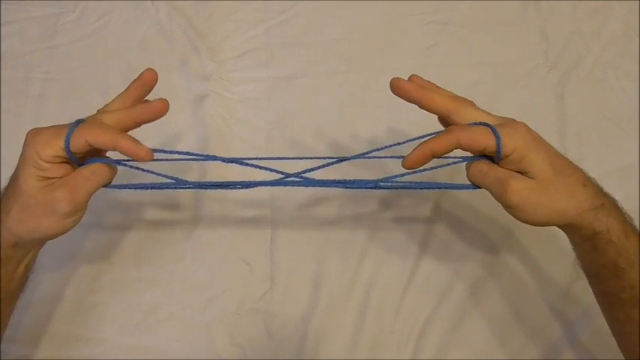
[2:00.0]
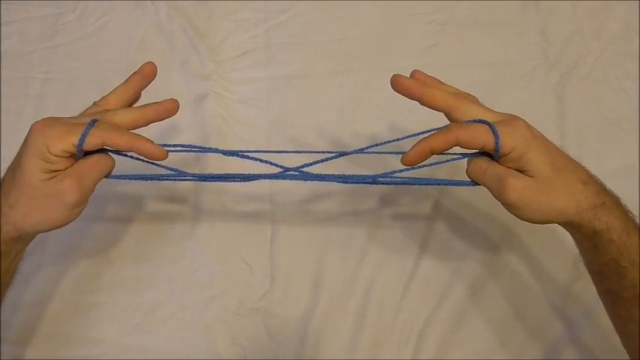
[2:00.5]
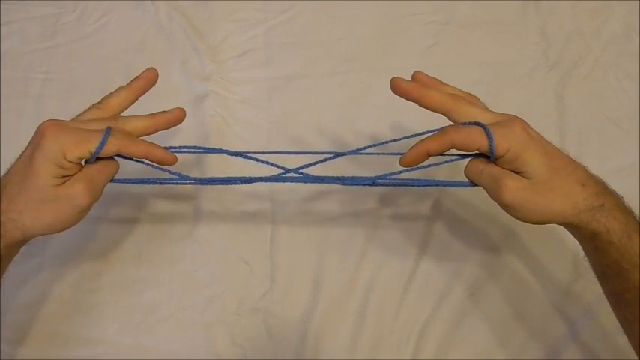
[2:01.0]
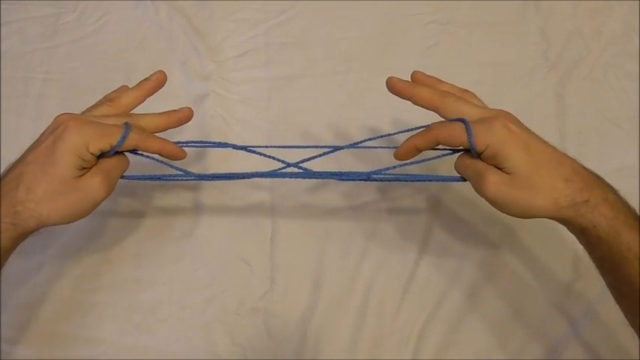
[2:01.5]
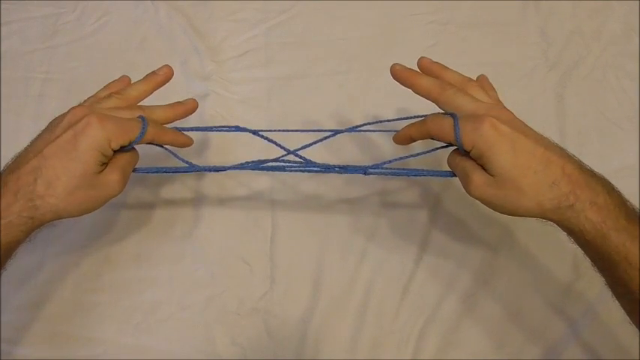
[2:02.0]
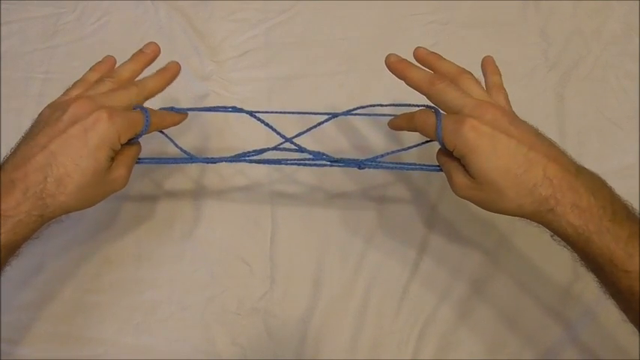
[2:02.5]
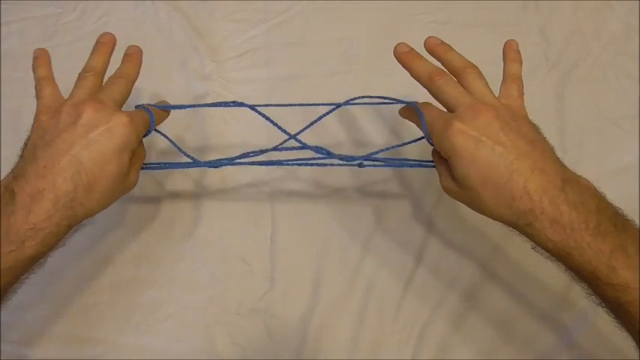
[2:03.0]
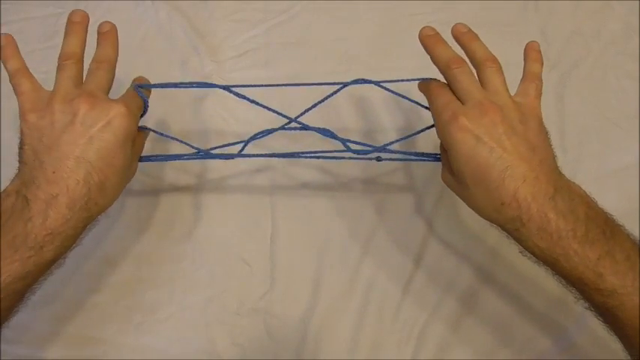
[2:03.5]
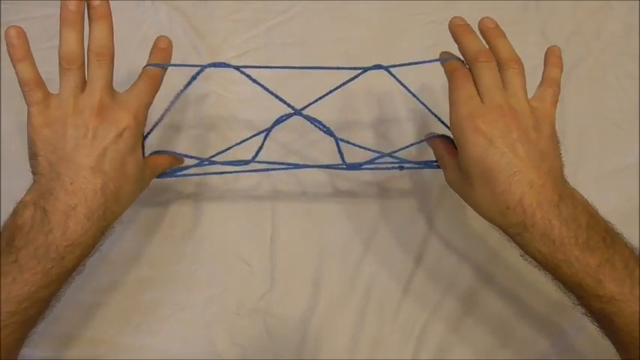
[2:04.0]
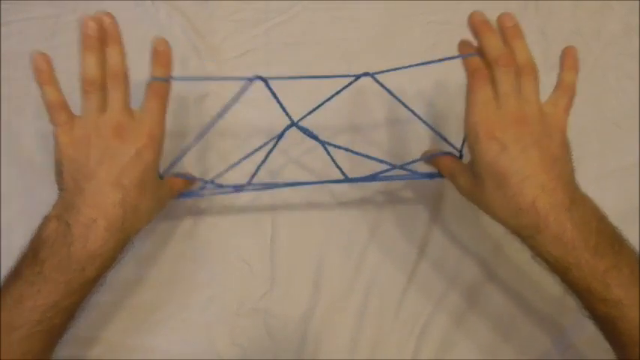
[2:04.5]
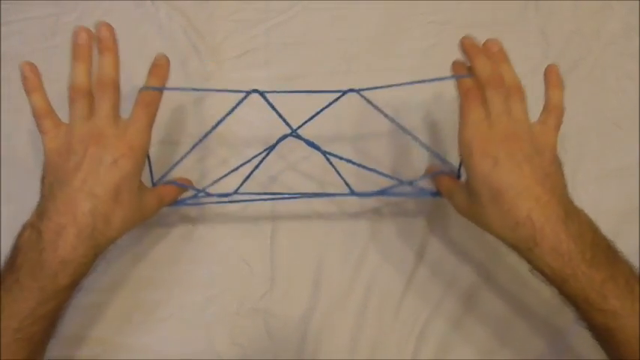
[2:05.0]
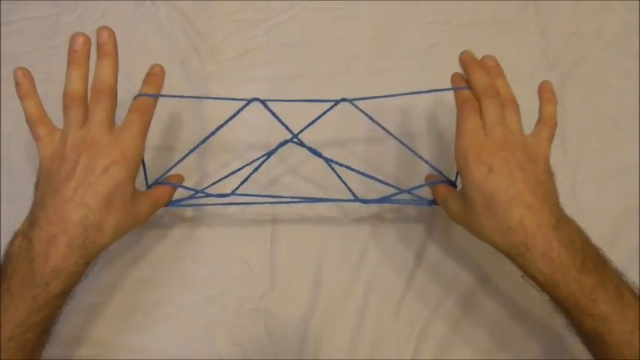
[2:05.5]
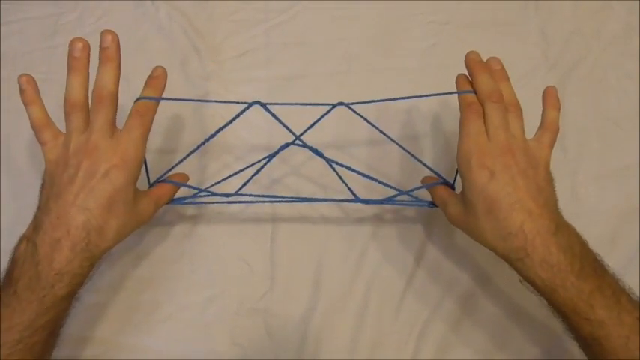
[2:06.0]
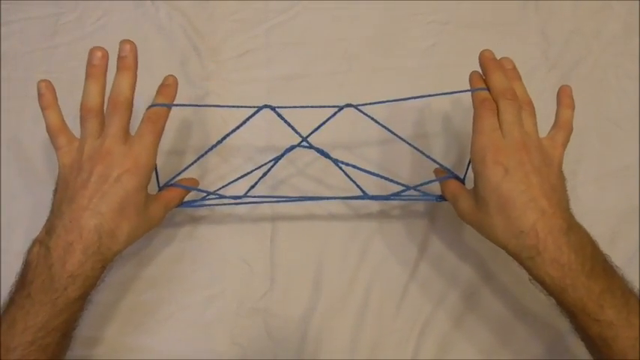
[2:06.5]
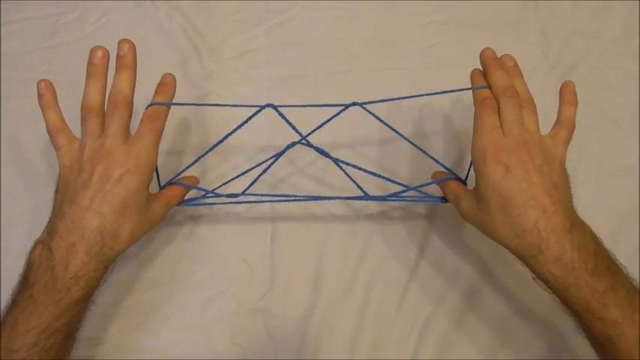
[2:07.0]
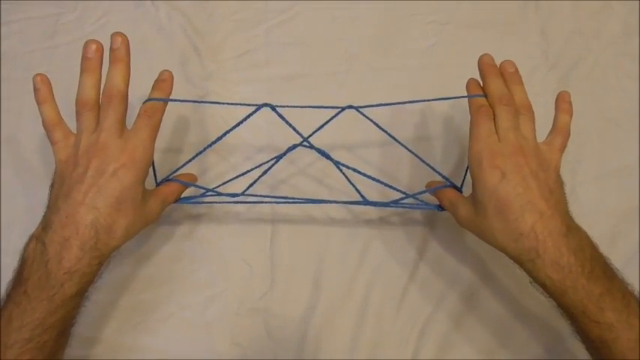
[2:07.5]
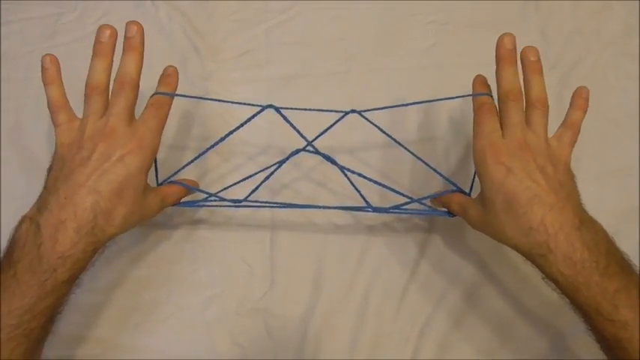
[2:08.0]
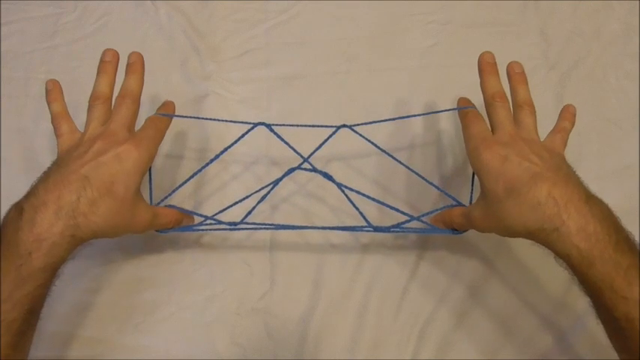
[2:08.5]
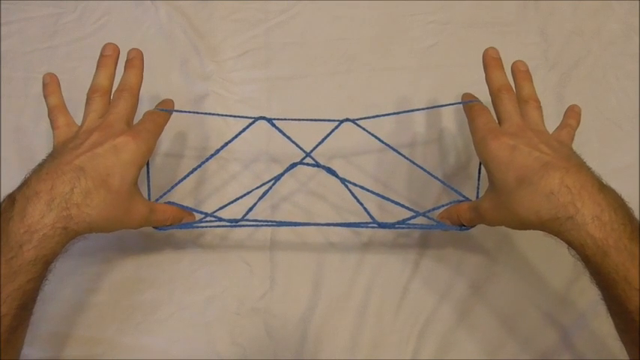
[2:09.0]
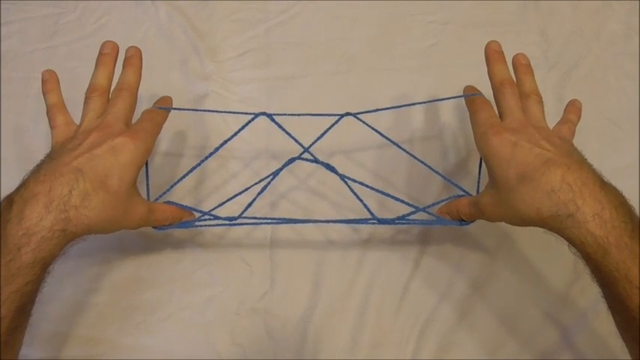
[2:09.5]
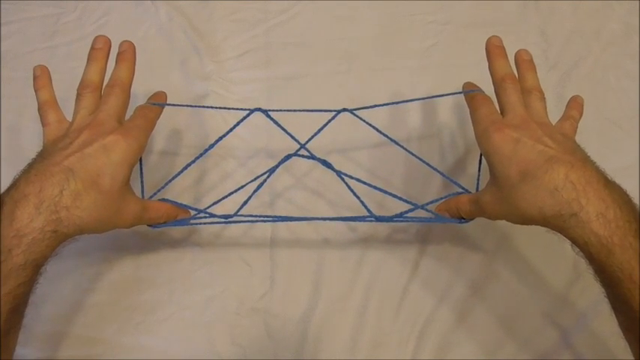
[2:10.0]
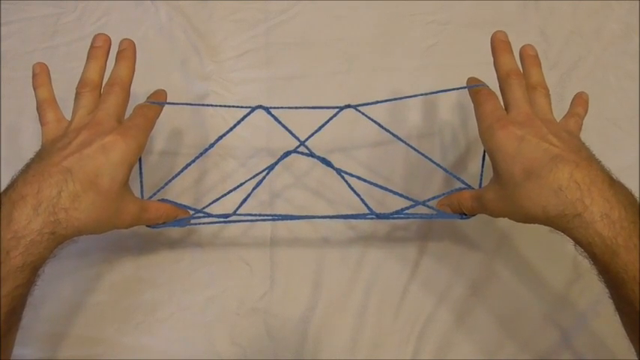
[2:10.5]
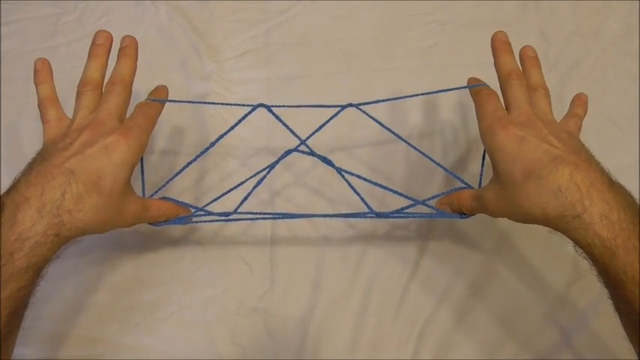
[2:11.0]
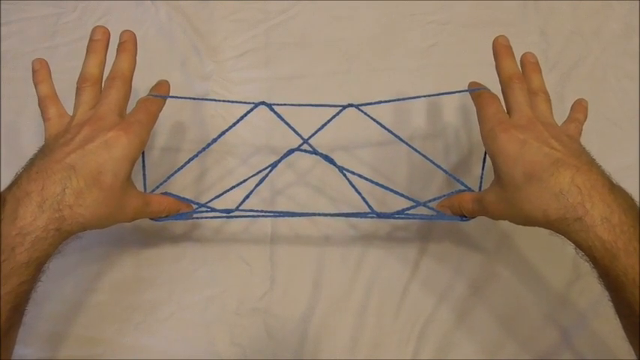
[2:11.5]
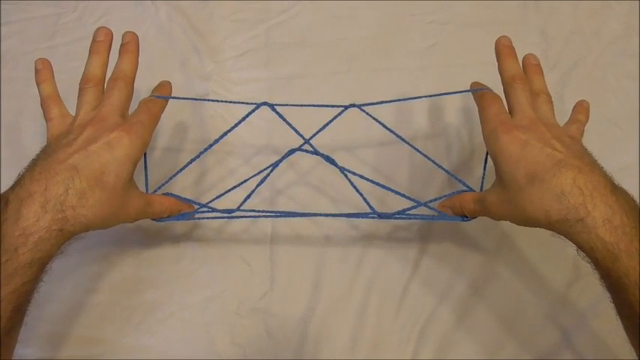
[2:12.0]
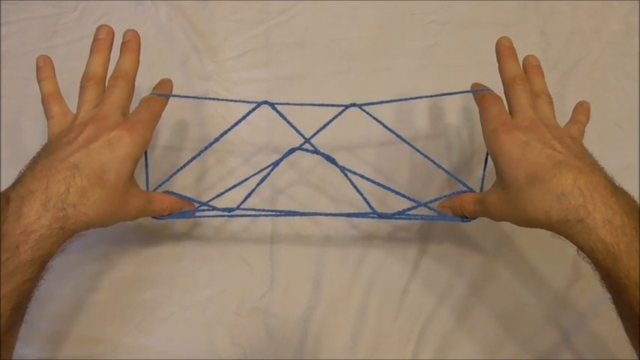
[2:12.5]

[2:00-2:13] Both of the man's hands are in the same formation. On each hand his pointing finger is over his thumb, and his thumb is tucked under the pointing finger, with the blue strings tucked in between as well; three other fingers are visible, pointing towards each other horizontally. He appears to move his two pointing fingers forward, making a rectangular shape out of the string. Within the rectangle, two triangles overlap at the top, looking like two mountain peaks next to each other, and at the bottom of the square it expands into a bigger triangle that looks like the bottom of the mountain. His hands are then all stretched out, with the camera at more of a top view.